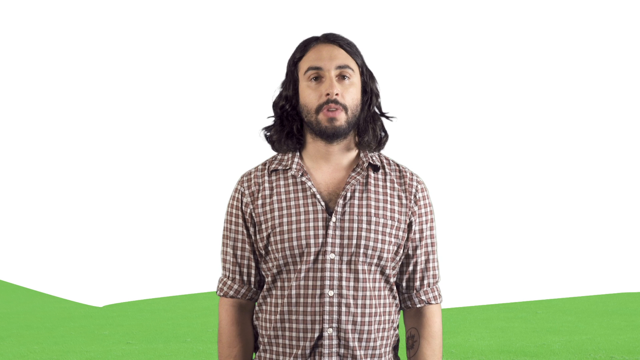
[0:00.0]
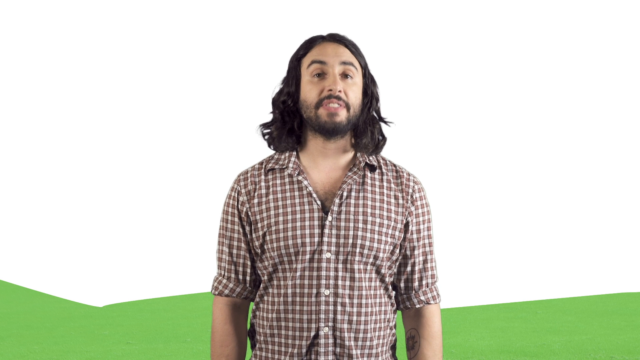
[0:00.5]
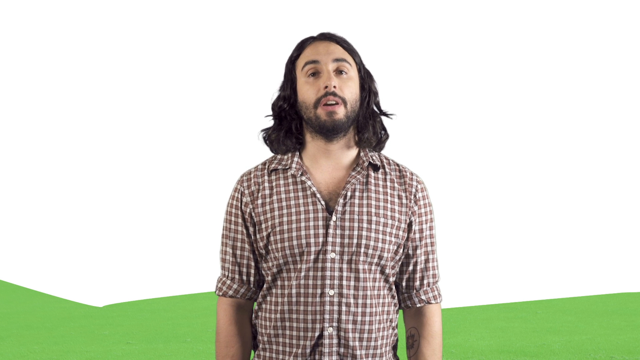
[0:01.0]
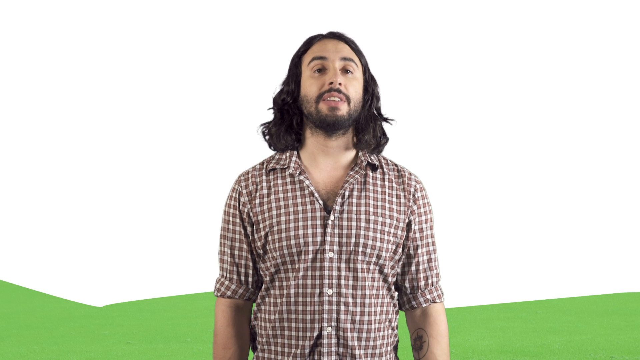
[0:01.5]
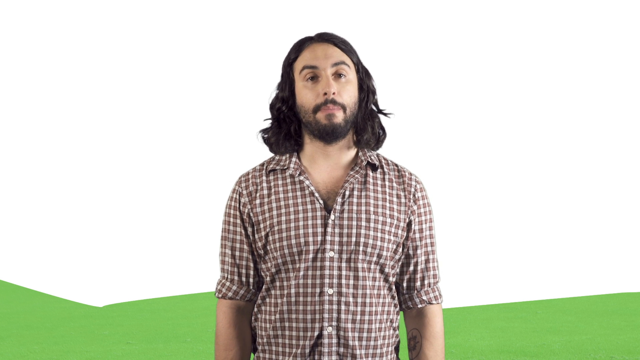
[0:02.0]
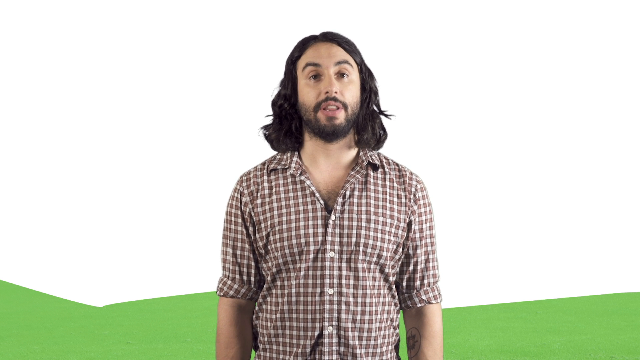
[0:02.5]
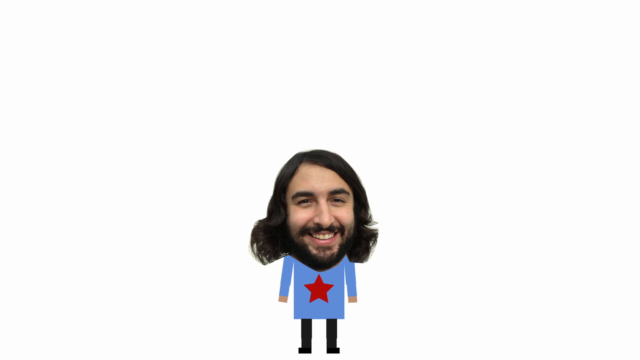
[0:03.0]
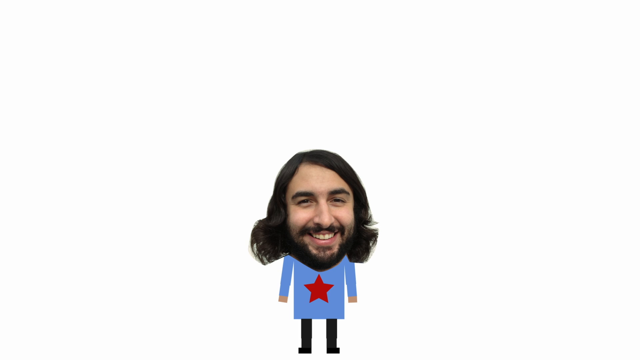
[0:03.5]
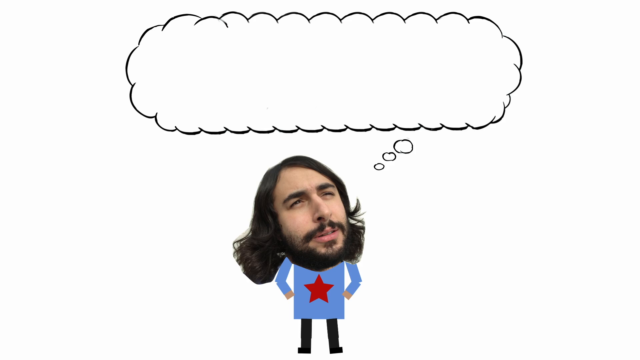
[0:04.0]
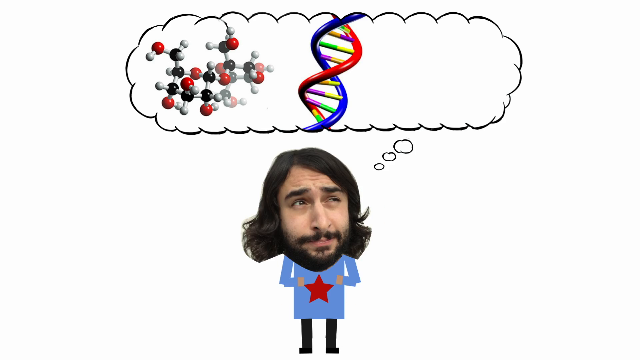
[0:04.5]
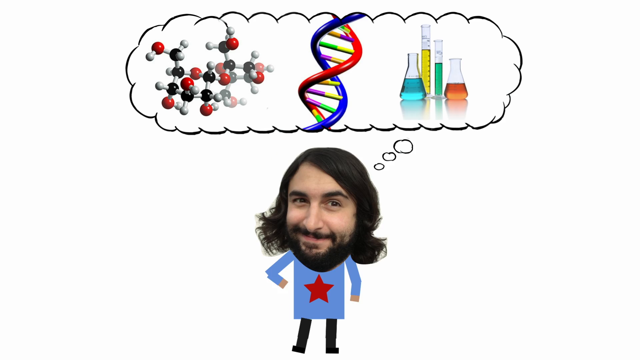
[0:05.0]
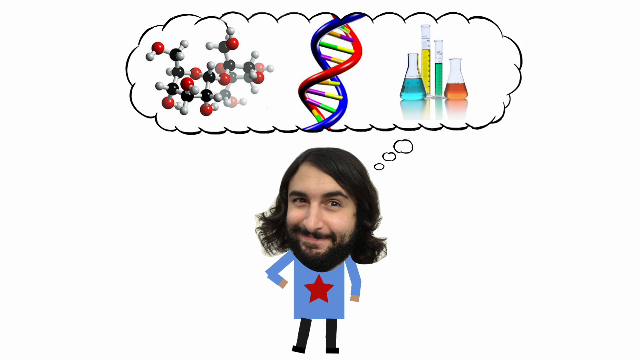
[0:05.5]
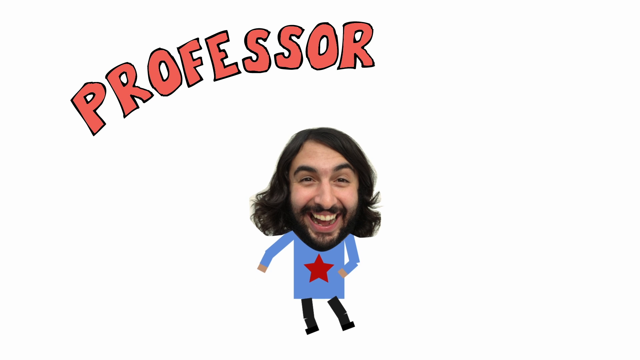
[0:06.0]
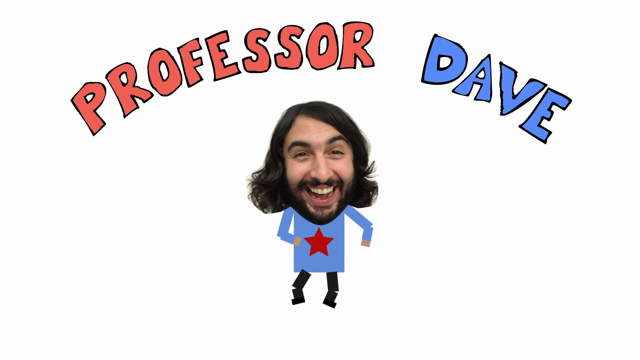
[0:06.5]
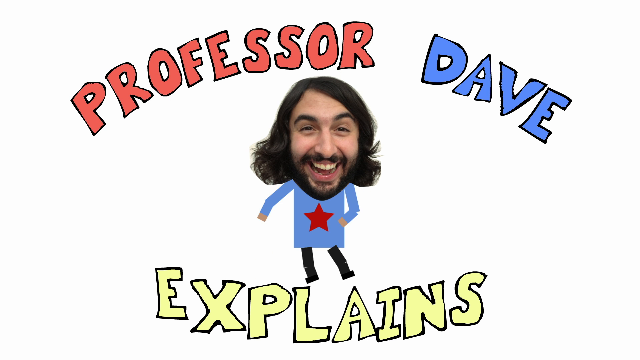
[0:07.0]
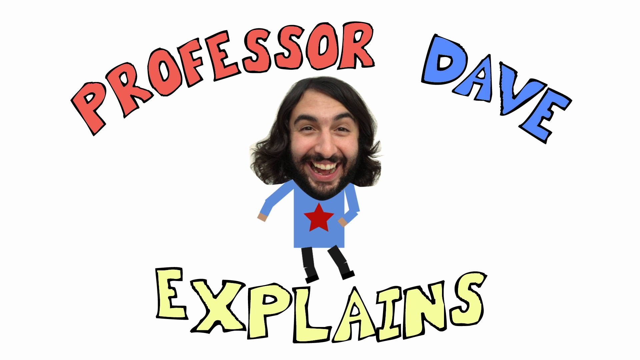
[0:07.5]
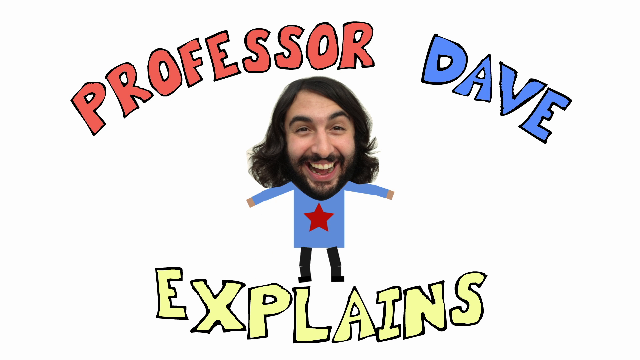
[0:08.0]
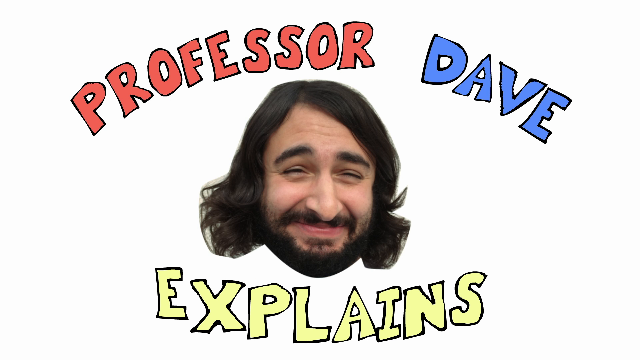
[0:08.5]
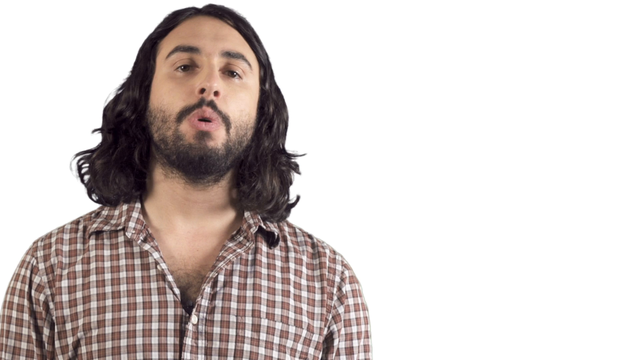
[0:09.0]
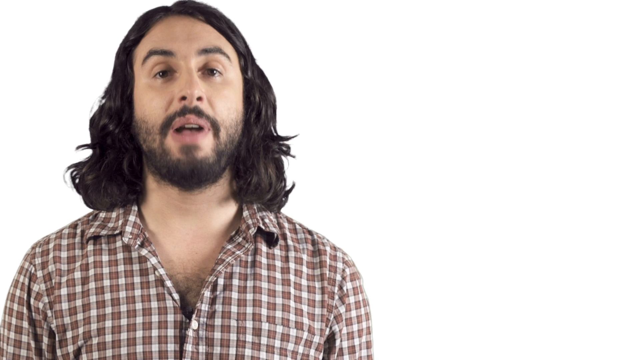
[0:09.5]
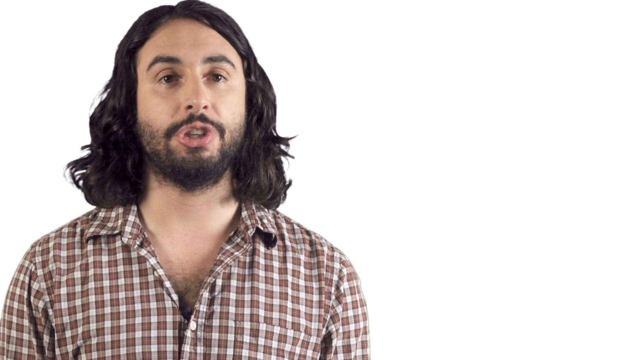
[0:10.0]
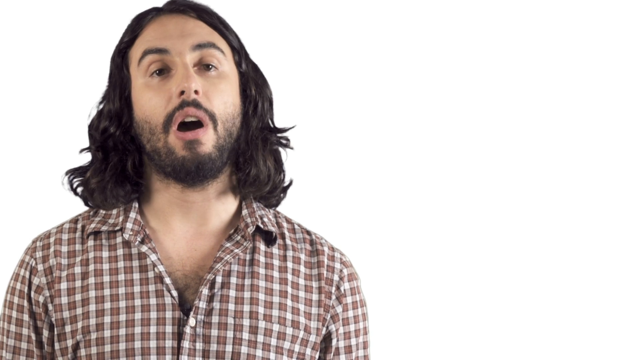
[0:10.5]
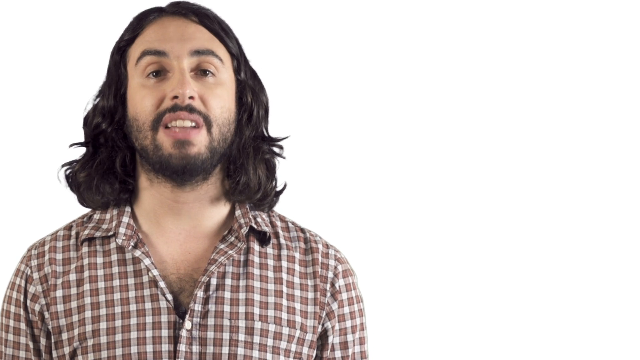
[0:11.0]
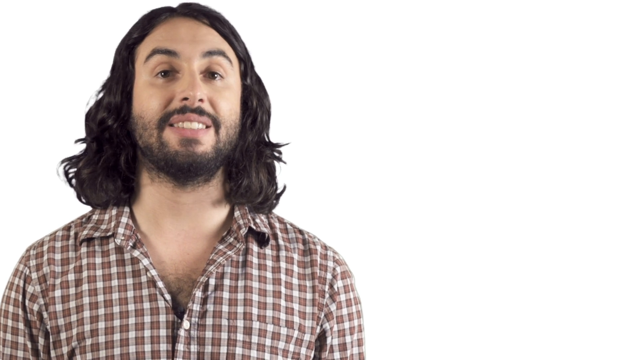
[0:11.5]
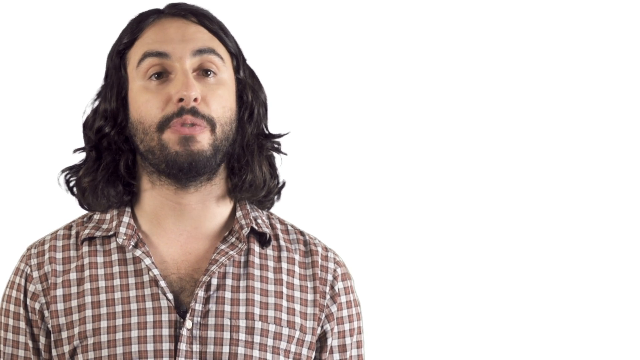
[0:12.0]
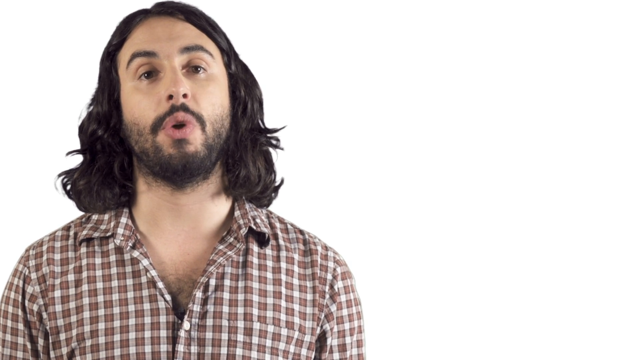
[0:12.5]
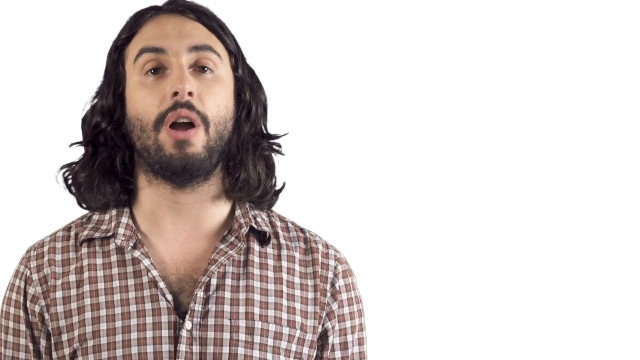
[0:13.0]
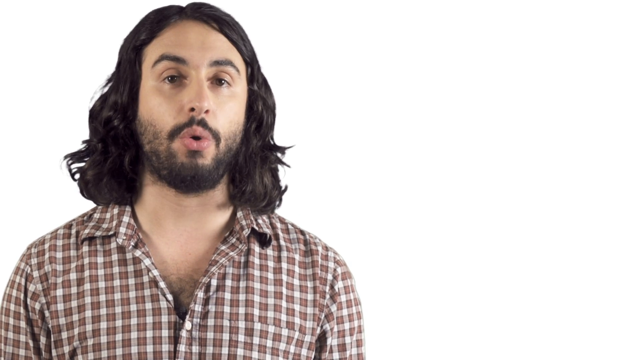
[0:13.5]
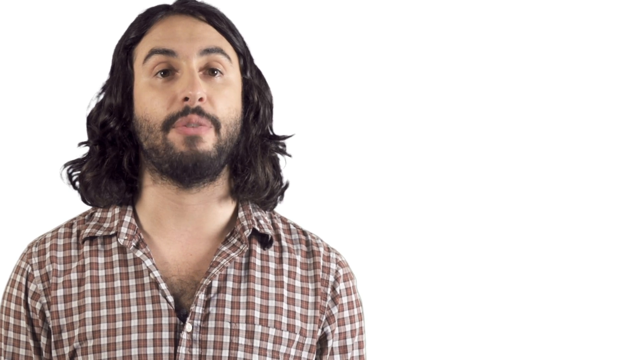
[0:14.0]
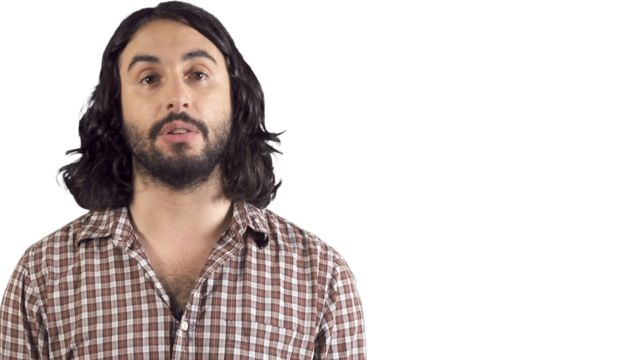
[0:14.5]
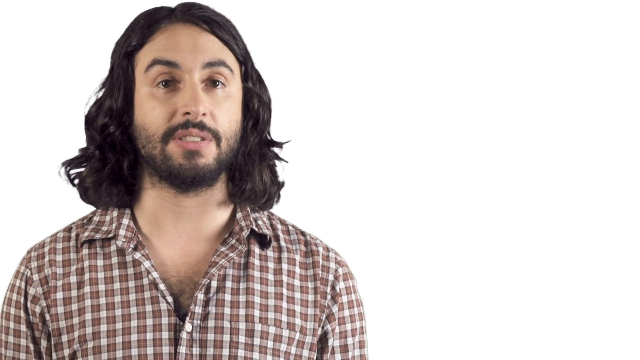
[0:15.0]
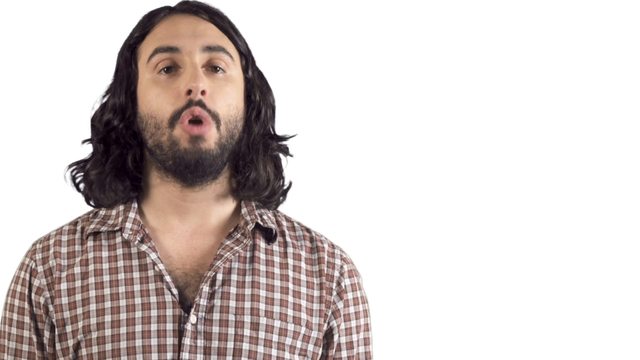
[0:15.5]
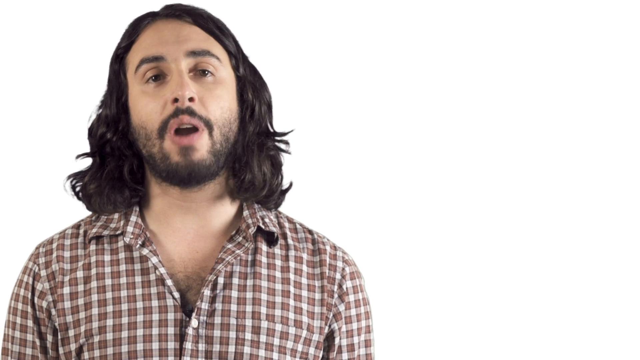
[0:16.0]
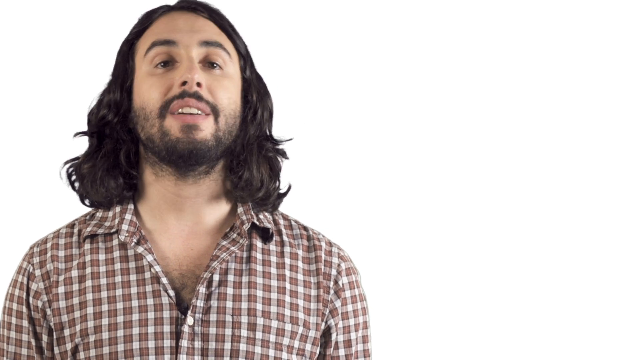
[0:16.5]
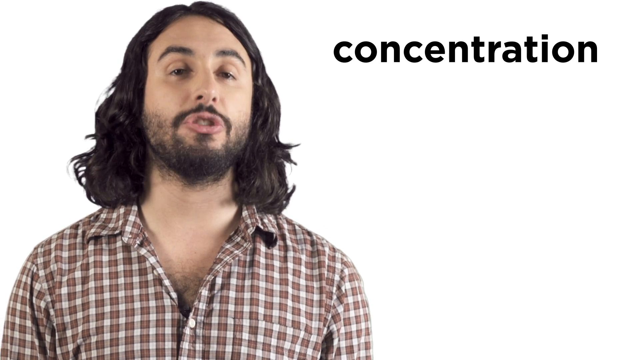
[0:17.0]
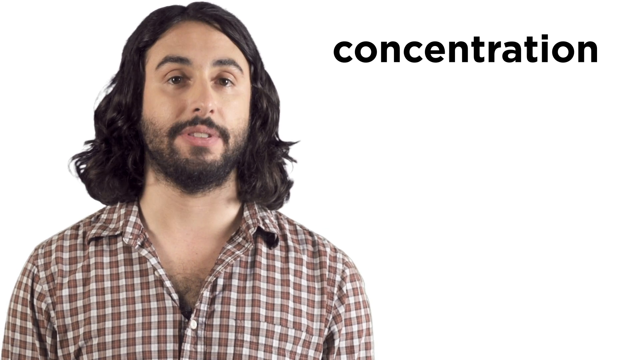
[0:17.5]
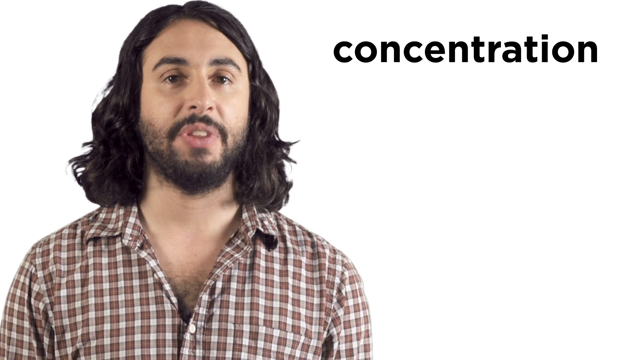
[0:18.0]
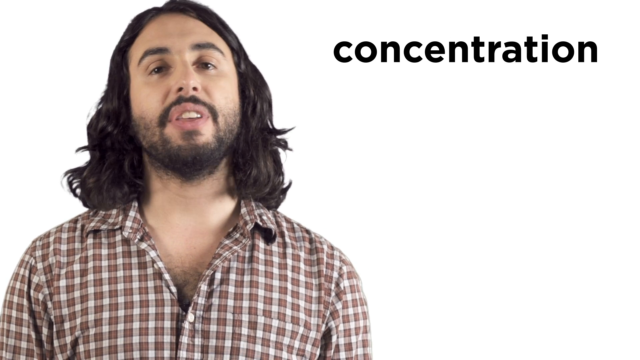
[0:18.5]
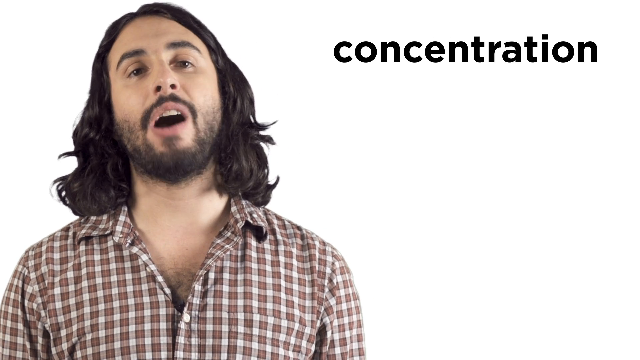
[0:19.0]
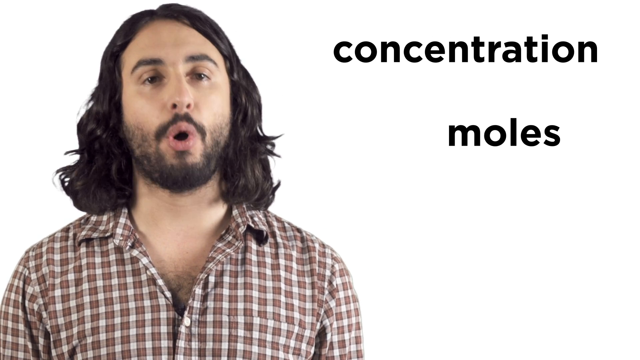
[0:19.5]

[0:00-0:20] A man in a brown and white plaid shirt, with long black hair combed behind his ears and a beard, is seen from the stomach up. Behind him is a large white background with a small section of green at the bottom that looks like a small green hill, behind the man's lower back. He talks while looking at the camera. The scene changes to a white background showing the man's smiling face placed on a cartoon body with a long blue shirt, a red five-pointed star in the middle, and black pants. His face changes: he looks up to the left for a second, and an empty thought bubble appears above his head. He then looks to his right and up, looking thoughtful, and on the left side of the bubble a computer drawing of red and black DNA molecules appears. He looks up and to his left again, and what looks like a twisting DNA molecule appears, resembling a twisted ladder with a blue left side, a red right side, and purple and yellow bars in between. He looks to the screen, smirking, and four beakers appear on the right side of the thought bubble: a flask with blue liquid on the left, the tallest beaker with yellow fluid in the middle, a shorter beaker with aqua green fluid to its right, and a short flask with brown liquid on the far right. Next, on another white screen, the same man's face on the cartoon body smiles, with the word "professor" in the upper left and "Dave" in the top right. The character floats up into the air, moving its arms from right to left, and the word "explains" appears in yellow underneath where the character was. The character reaches its hands out to the left and right. A large picture of the professor's smiling face then appears in the center. The video returns to the man, seen from the chest up, with the right side of the screen and the background white. He talks while looking at the screen, slightly shaking his head. The word "concentration" appears in black in the top right, followed by the word "moles" beneath it.